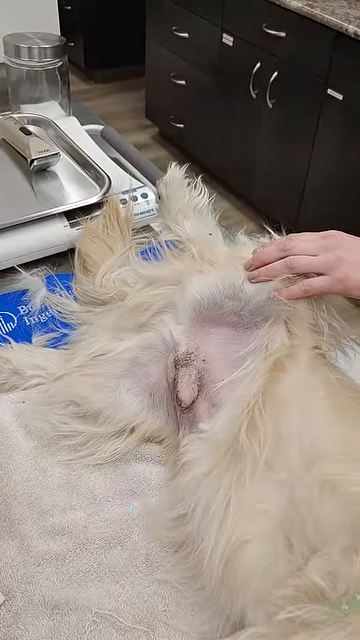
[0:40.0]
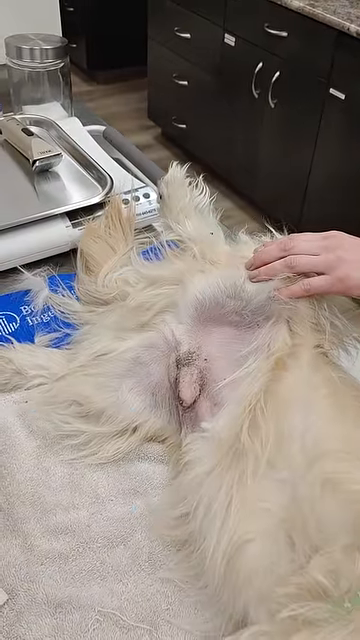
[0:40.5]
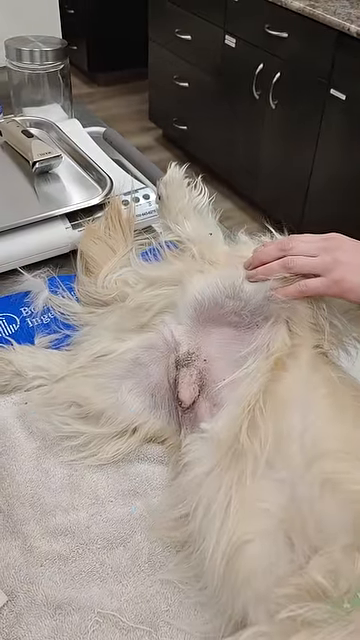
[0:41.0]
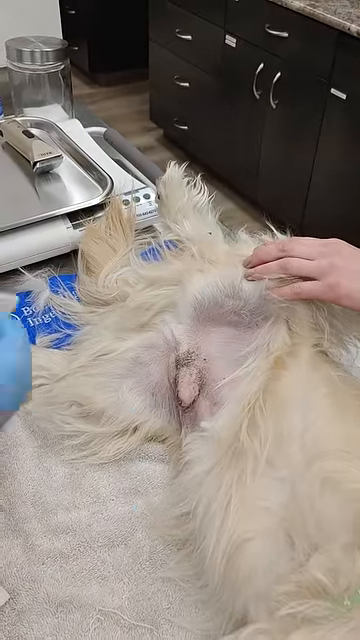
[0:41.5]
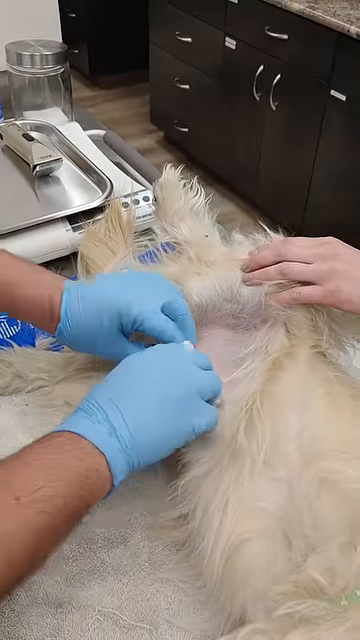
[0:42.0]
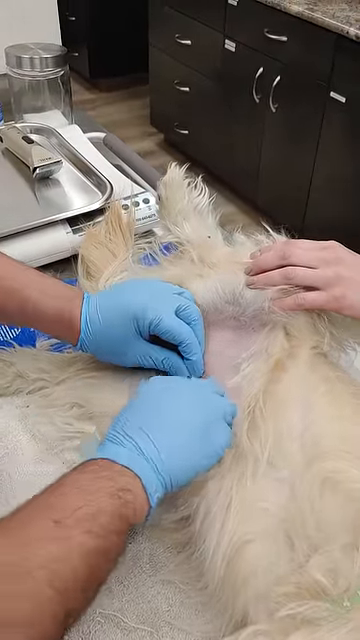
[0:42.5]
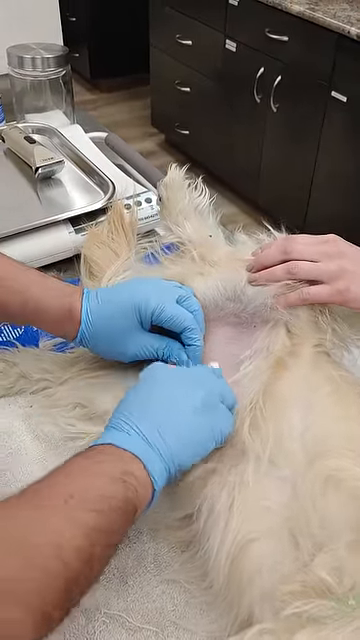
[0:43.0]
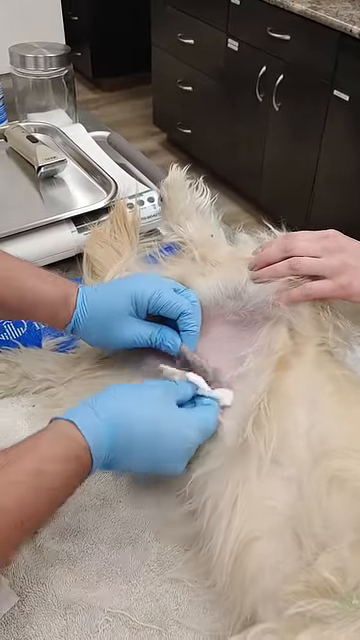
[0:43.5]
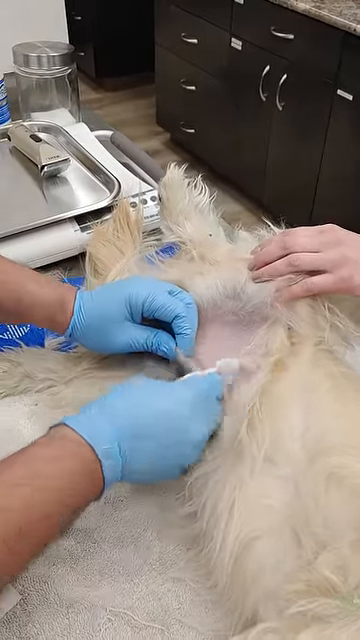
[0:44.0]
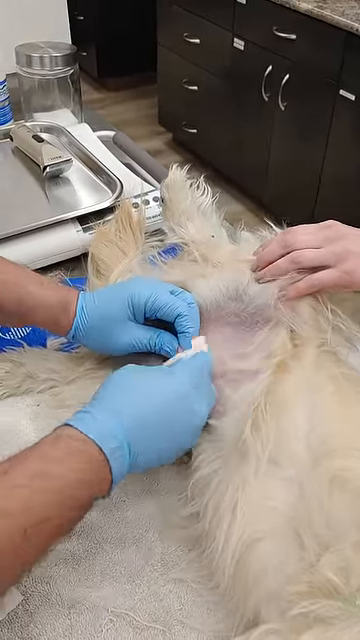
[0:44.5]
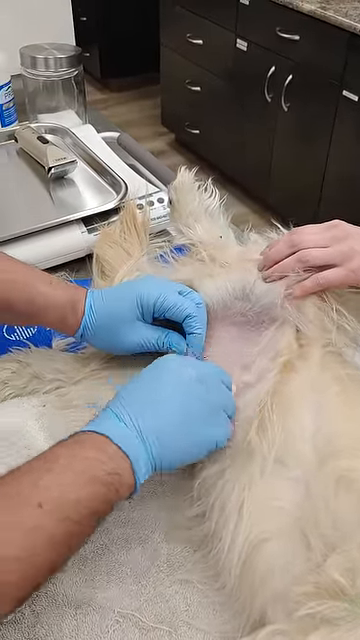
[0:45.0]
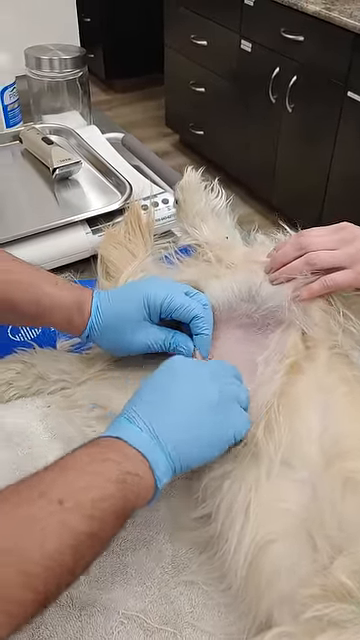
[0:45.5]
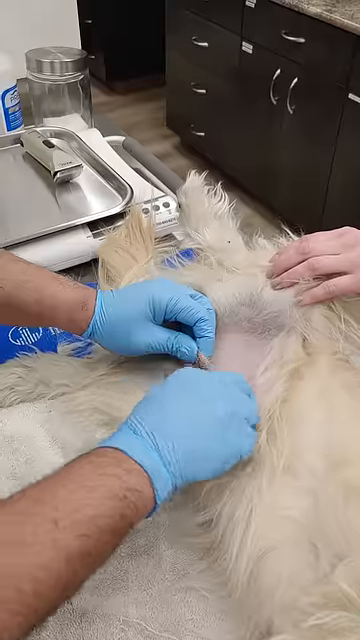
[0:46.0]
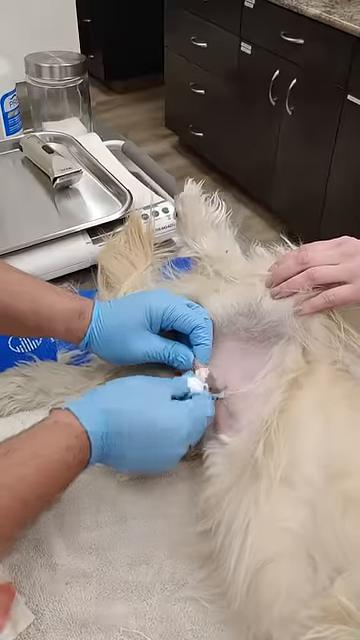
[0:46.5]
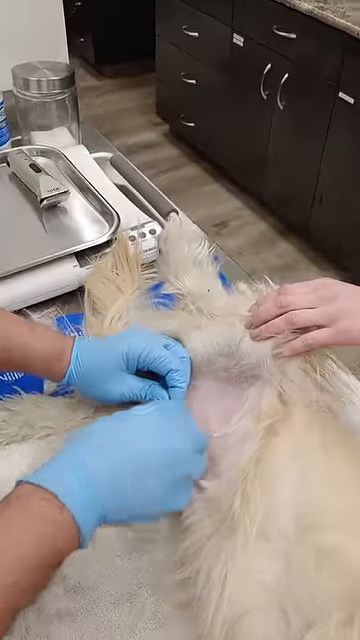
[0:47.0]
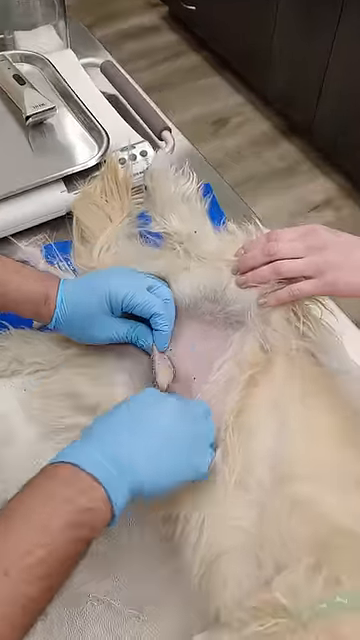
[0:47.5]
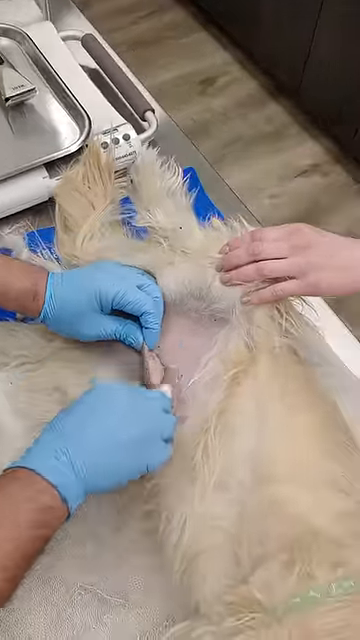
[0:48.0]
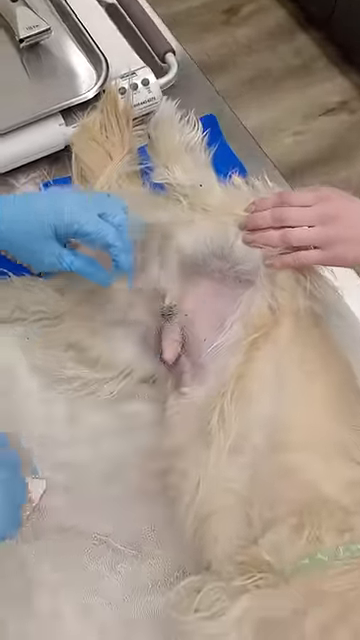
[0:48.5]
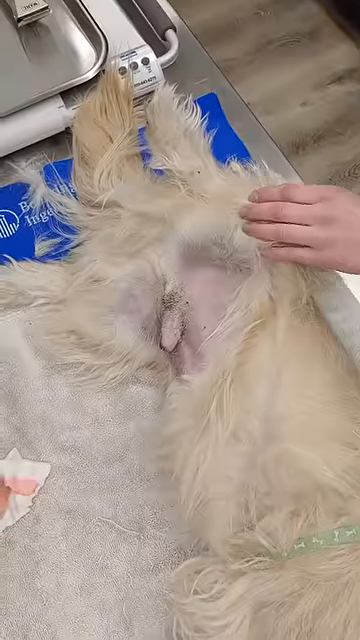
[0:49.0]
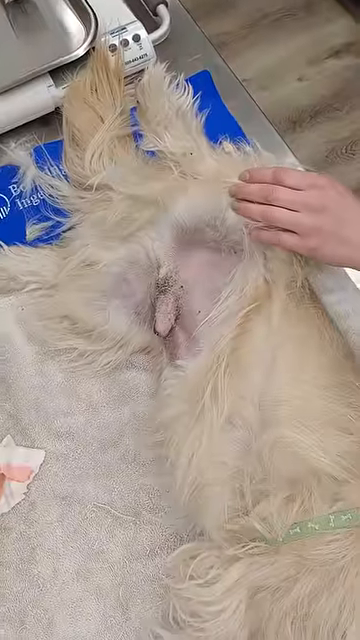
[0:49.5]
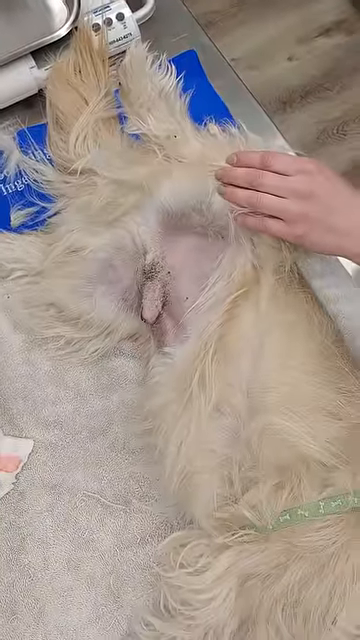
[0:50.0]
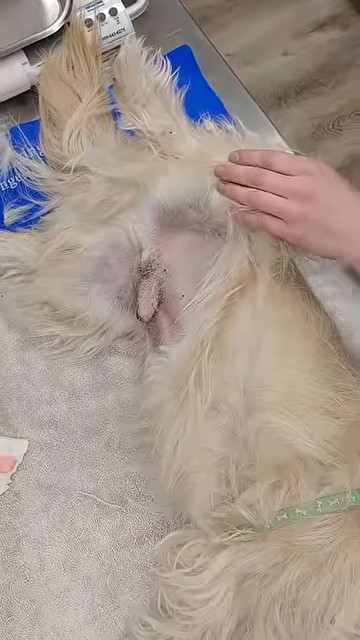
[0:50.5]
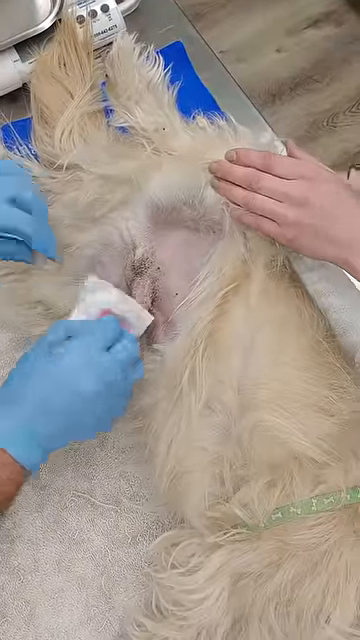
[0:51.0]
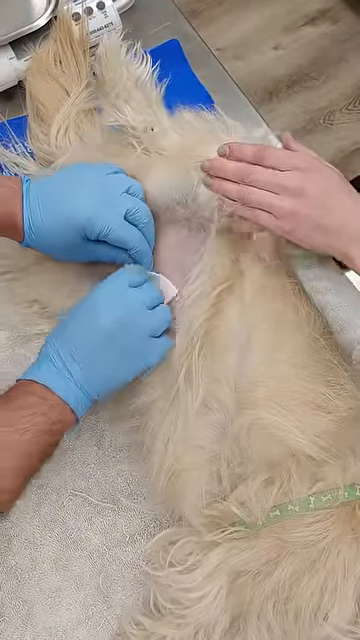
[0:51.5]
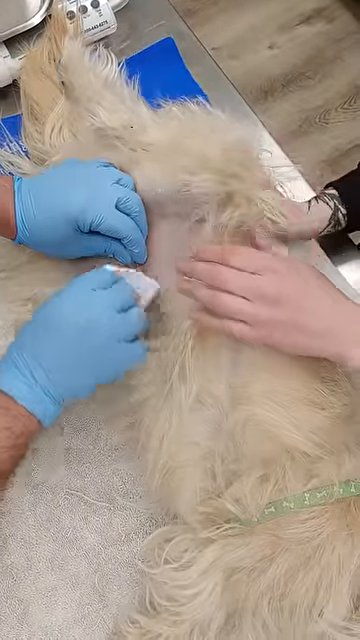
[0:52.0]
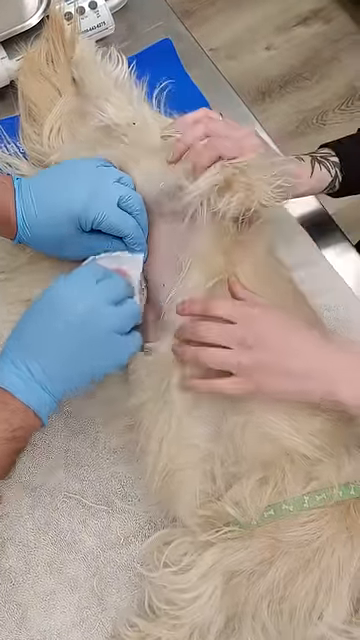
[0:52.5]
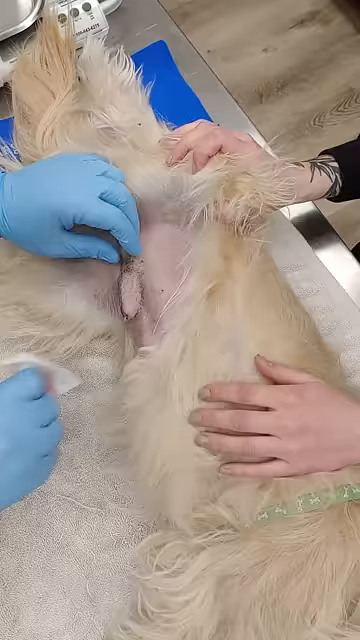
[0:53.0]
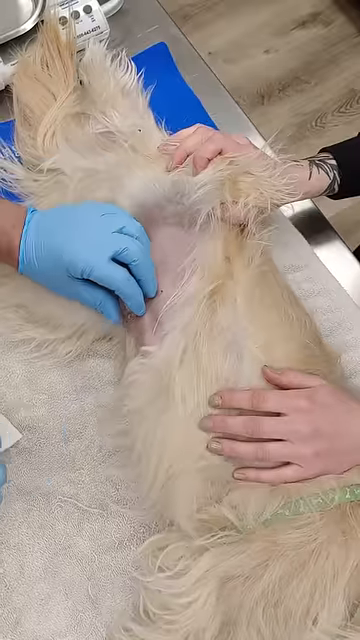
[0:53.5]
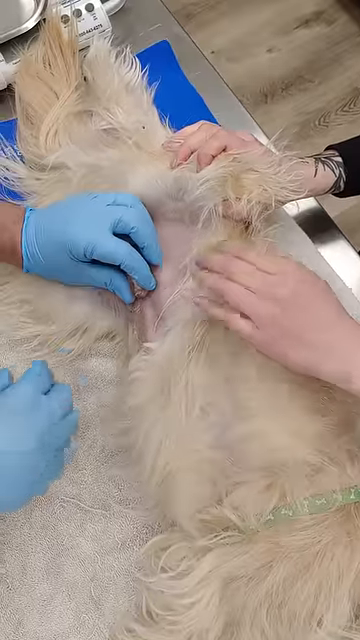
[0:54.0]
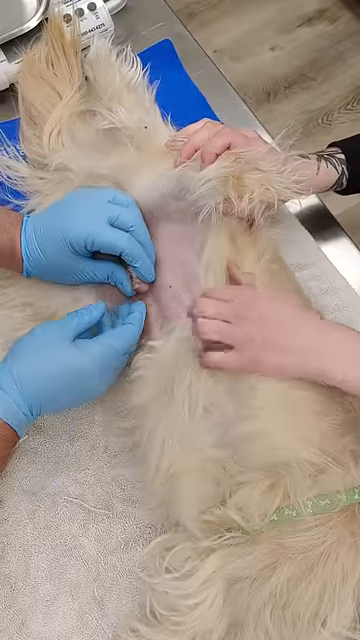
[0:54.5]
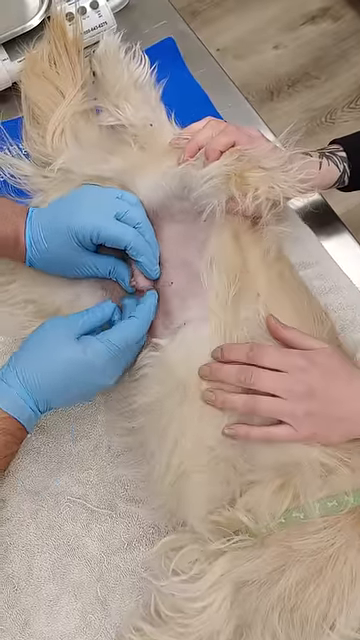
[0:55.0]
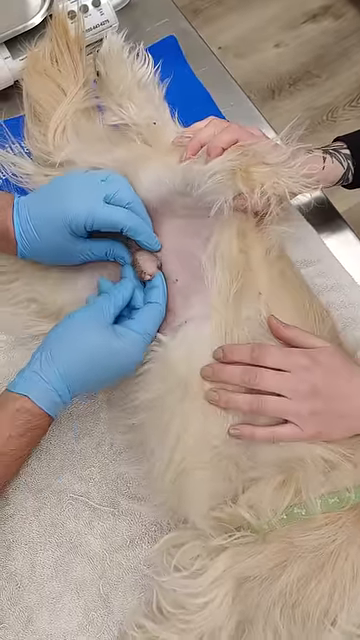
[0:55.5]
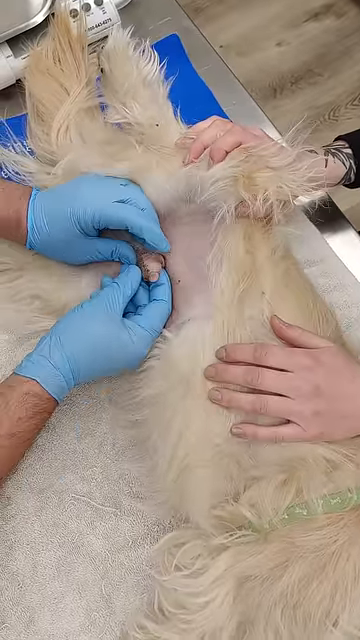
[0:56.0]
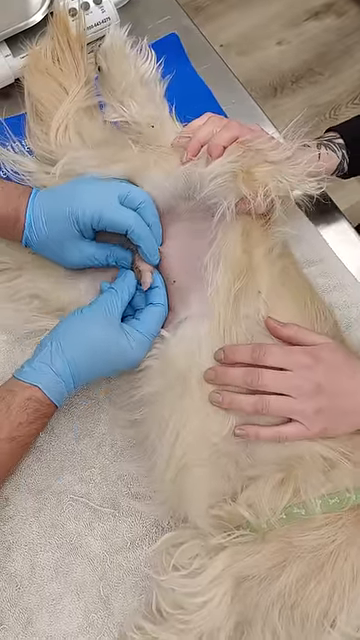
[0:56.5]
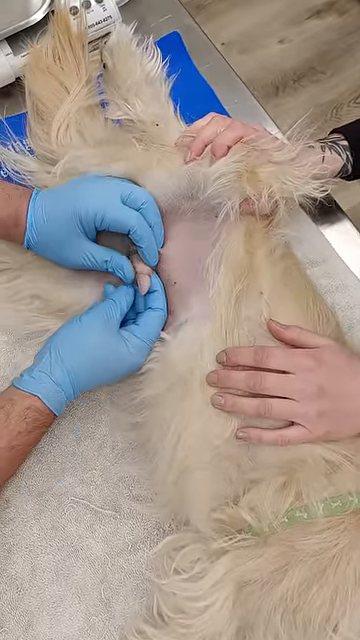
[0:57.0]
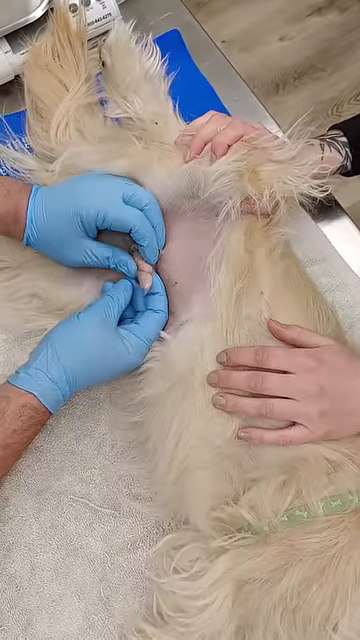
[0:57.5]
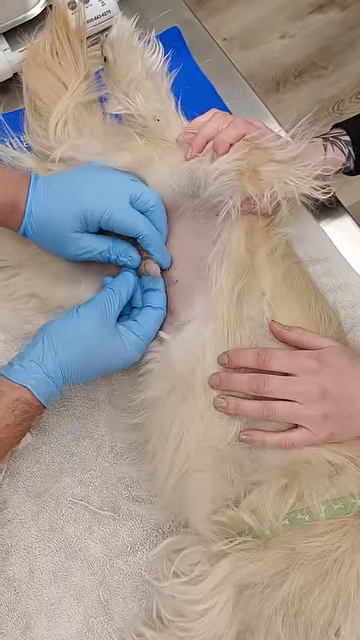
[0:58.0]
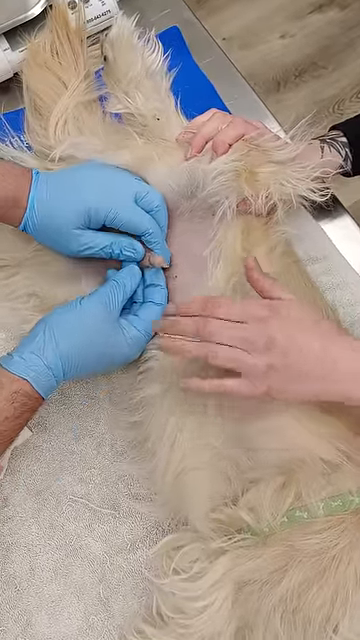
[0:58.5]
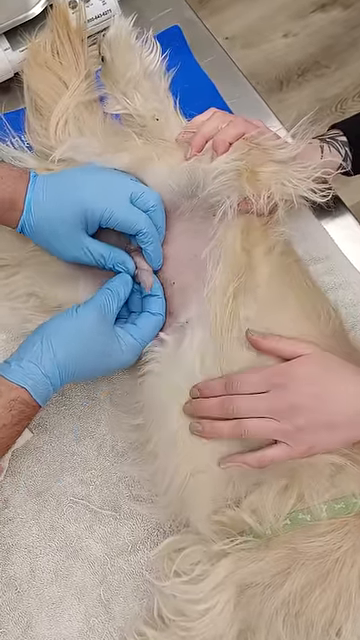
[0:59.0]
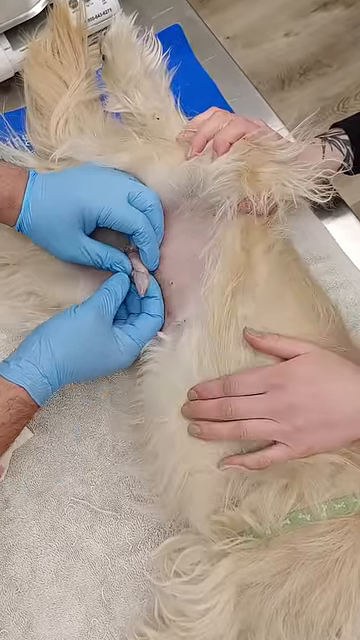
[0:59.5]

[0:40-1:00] The veterinarian wipes down the area of the dog that it urinates out of while an assistant smooths the hair down to get the fur out of the doctor's way. The assistant's hands appear Caucasian, and she looks female, as her hand motions seem feminine. The dog, probably being worked on, has beige to white fur and is kind of lying on a large stainless steel table. A razor is in the upper left corner, probably used to shave the fur for the surgery.